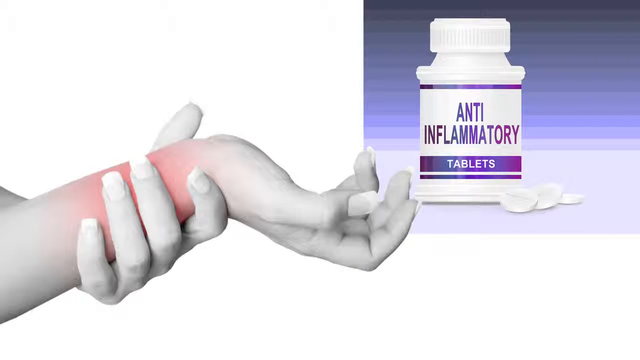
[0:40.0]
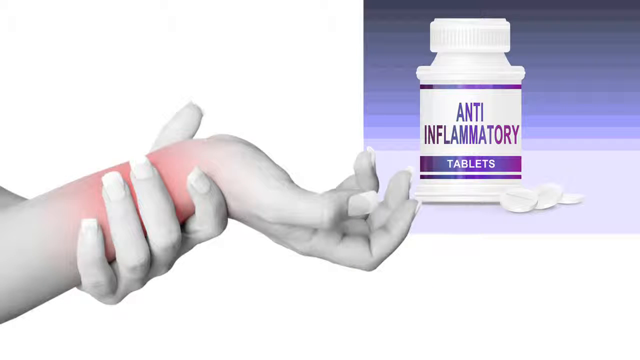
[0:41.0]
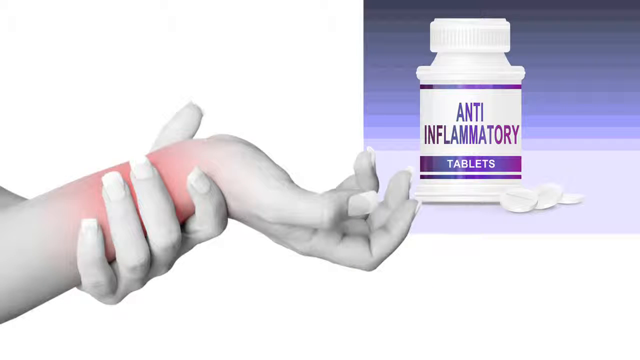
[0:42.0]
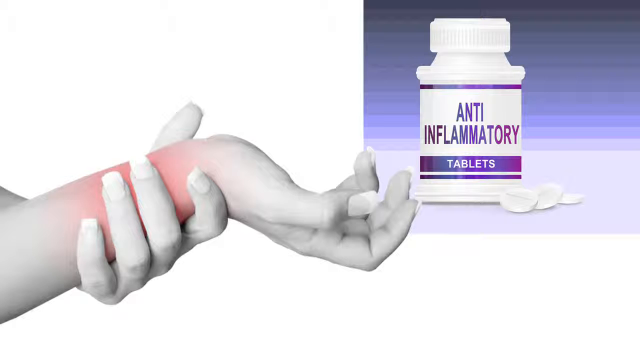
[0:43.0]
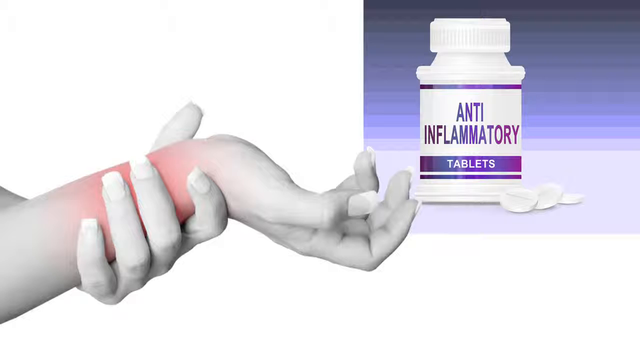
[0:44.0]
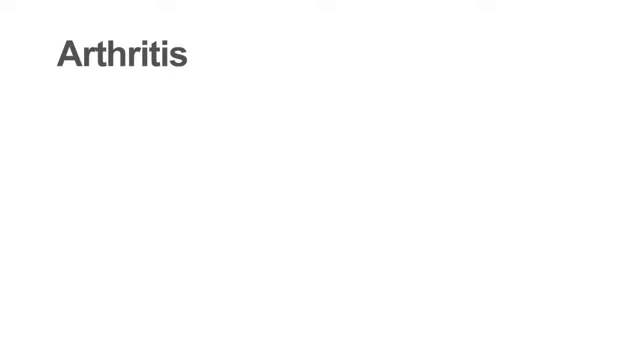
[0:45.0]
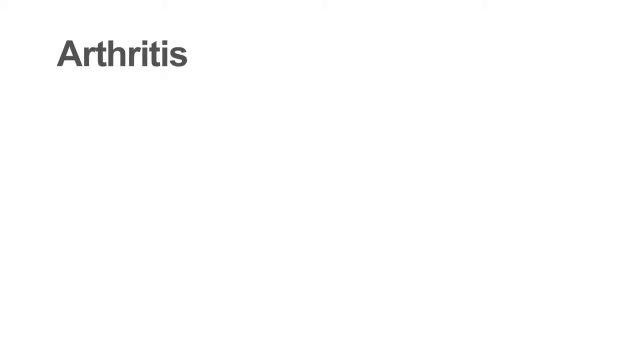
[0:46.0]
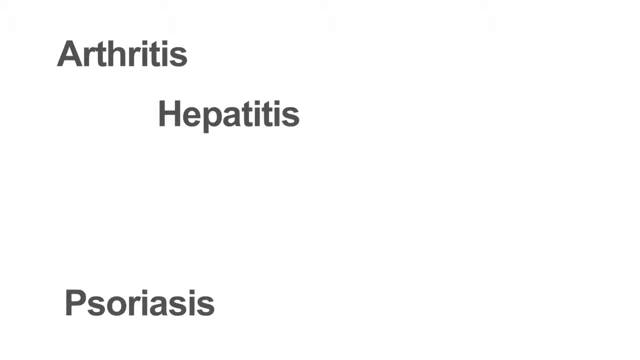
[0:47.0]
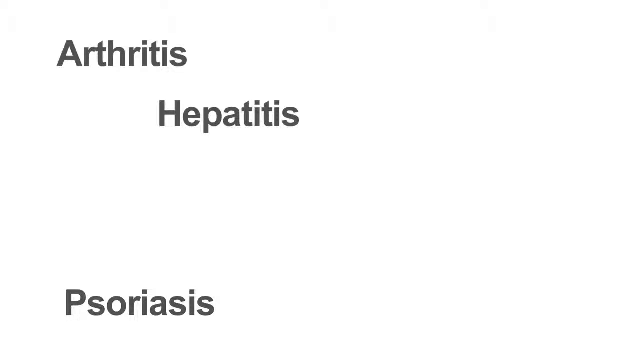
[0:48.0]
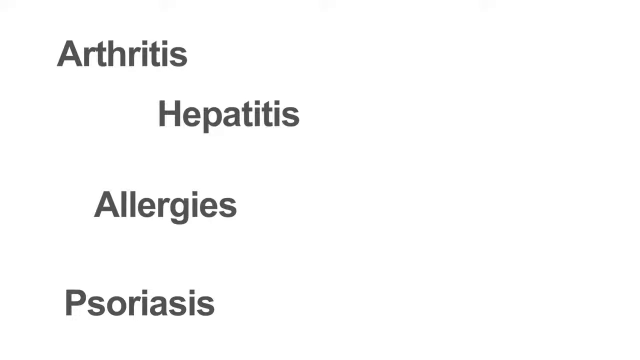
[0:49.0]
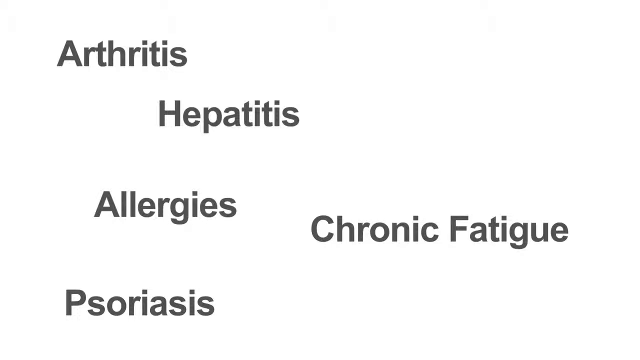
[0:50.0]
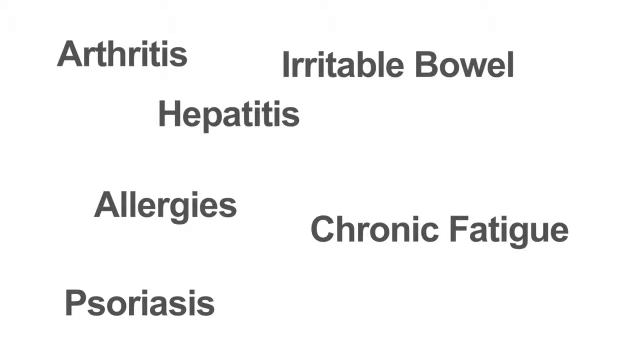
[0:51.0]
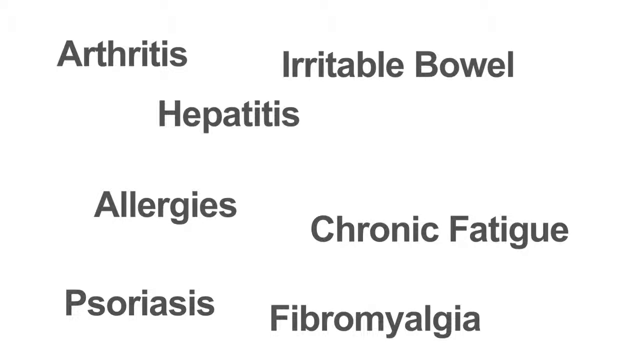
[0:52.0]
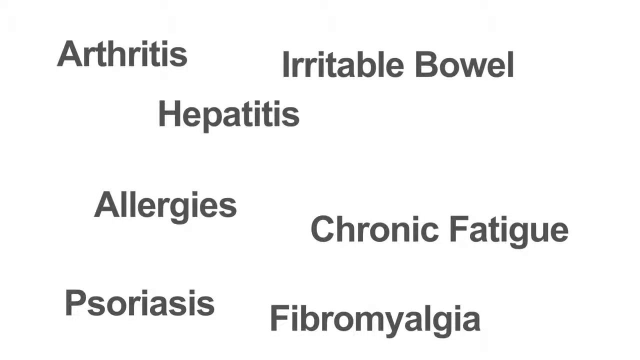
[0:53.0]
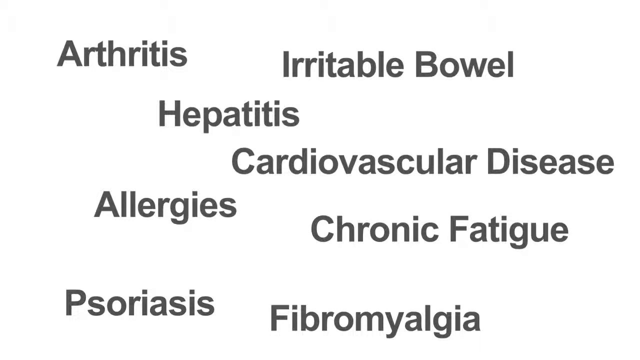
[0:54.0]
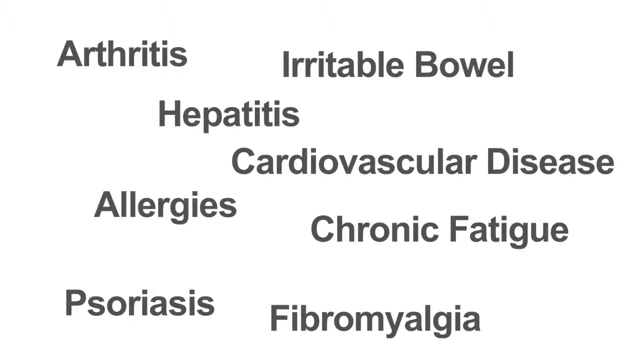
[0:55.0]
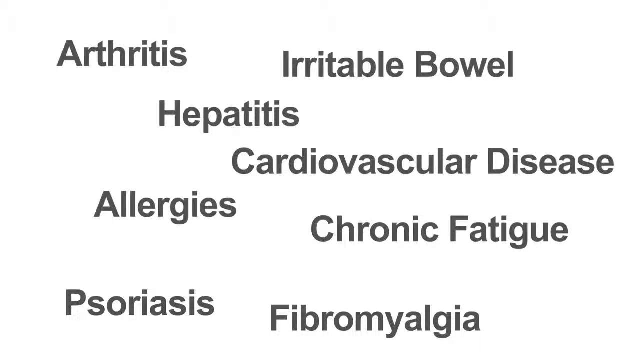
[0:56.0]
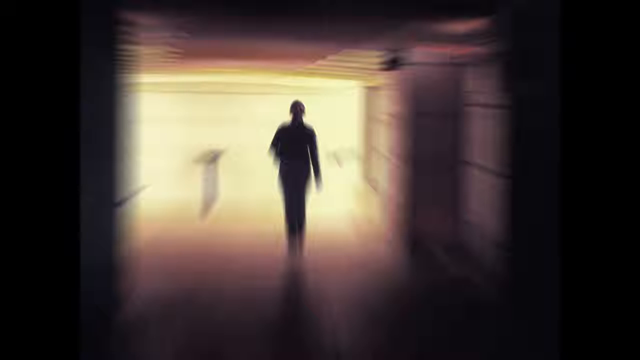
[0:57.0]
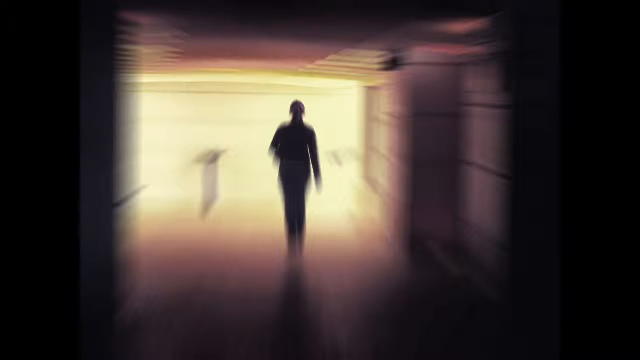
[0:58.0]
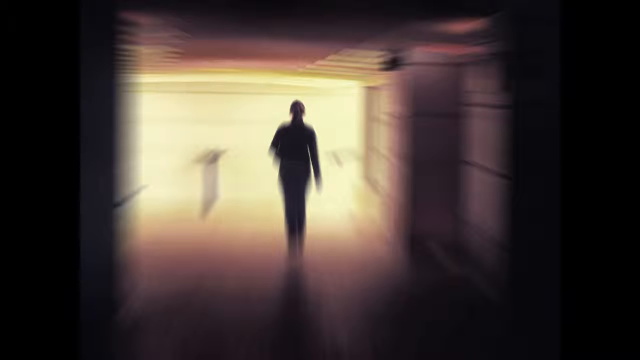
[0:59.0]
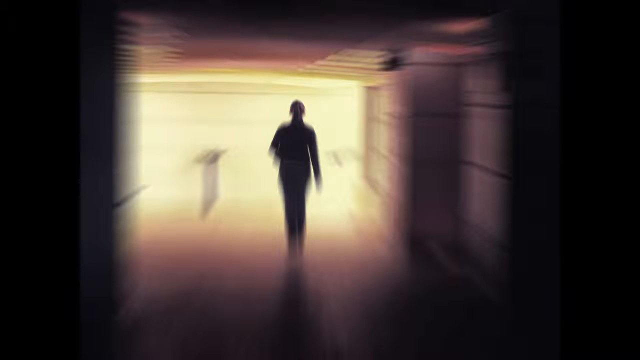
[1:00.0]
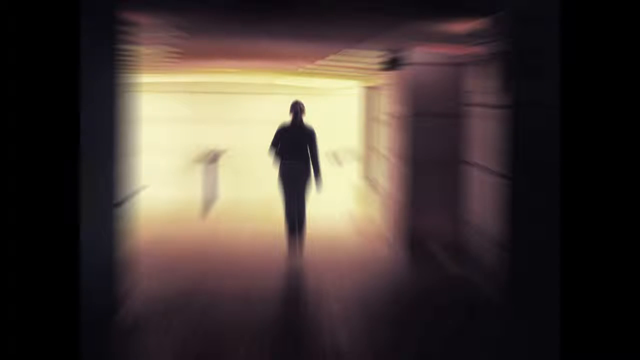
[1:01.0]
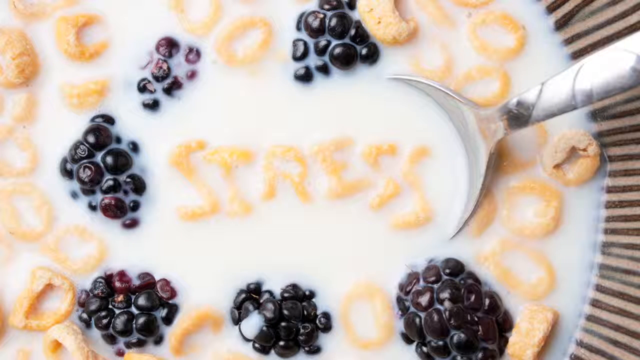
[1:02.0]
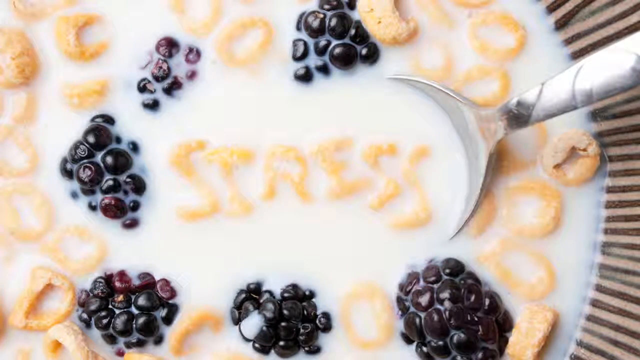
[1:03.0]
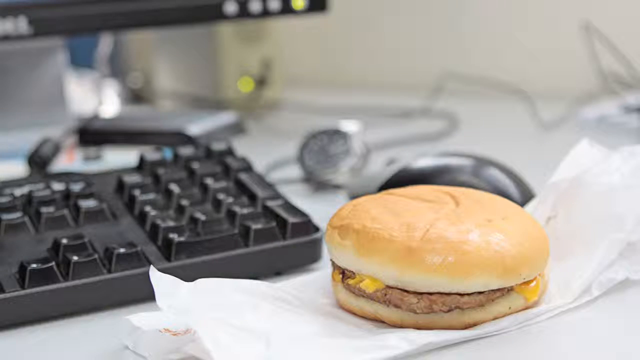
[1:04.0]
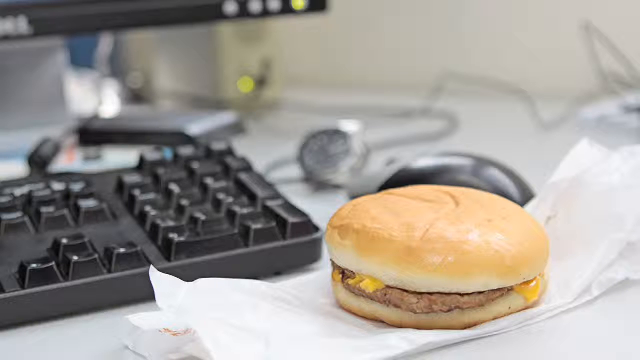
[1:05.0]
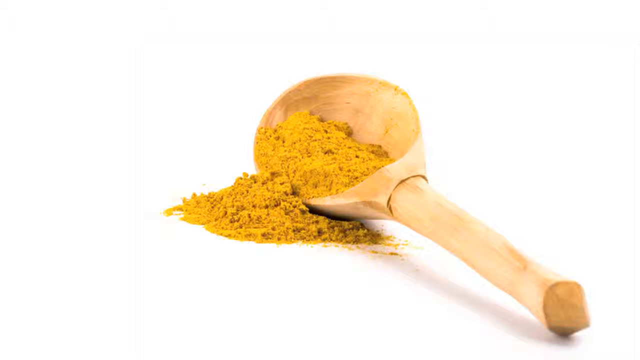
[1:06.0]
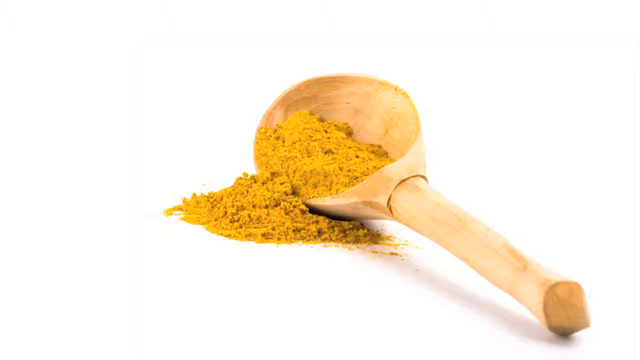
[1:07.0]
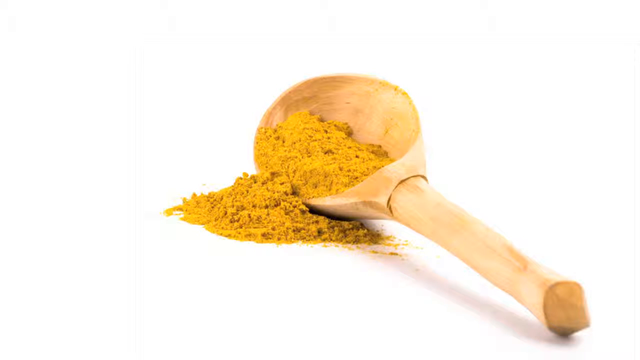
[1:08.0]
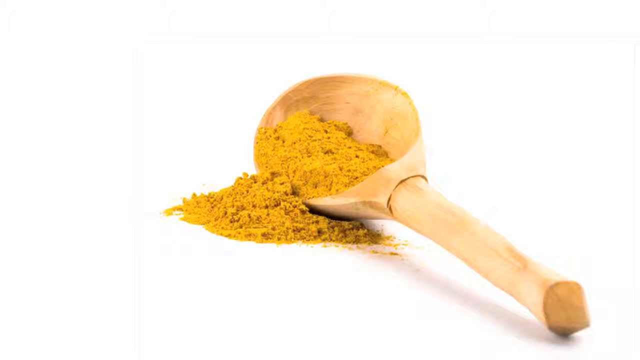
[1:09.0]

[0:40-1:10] A woman holds her wrist with her left hand, her right forearm and palm facing upward. In the top right corner is a white pill bottle with purple writing reading "anti-inflammatory" and "tablets". The screen then changes to a white background where words appear one by one at random all over the screen: "arthritis", "hepatitis", "psoriasis", "allergies", "chronic fatigue", "irritable bowel", "fibromyalgia", "cardiovascular disease". Next comes an out-of-focus, hazy image of someone walking down a dark corridor toward the light, apparently outside daylight. The person walks toward yellow light while the corridor is in shadow, and they appear only as a dark silhouette, like a black shadow, with no features visible. A cereal bowl follows, holding Cheerio cereal with what looks like blackberries in the milk and a spoon in the cereal; some of the cereal pieces spell out the word "stress". Then a work desk is shown with a black keyboard, a black mouse and the edge of a black monitor; on the right, a cheeseburger is on a piece of paper. Finally, a wooden spoon contains turmeric powder, with some turmeric powder also spilt on the tabletop.